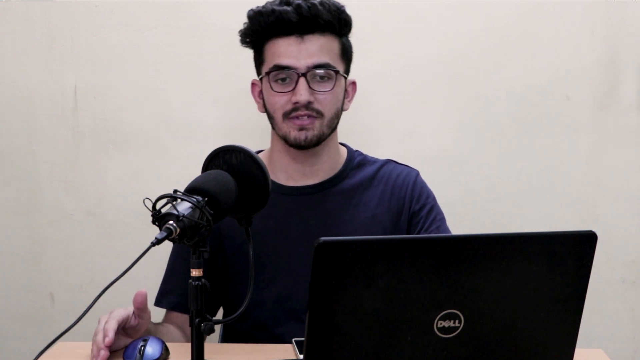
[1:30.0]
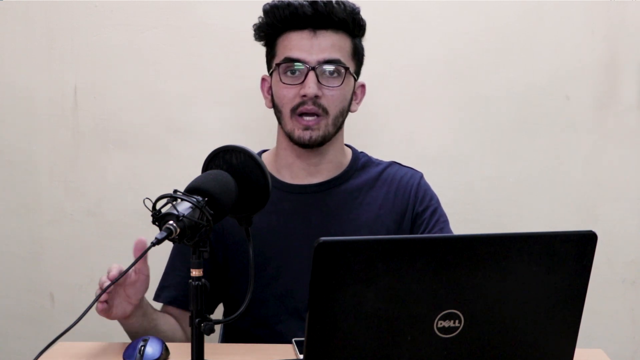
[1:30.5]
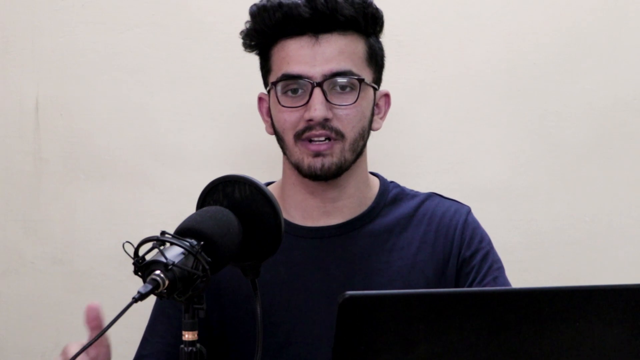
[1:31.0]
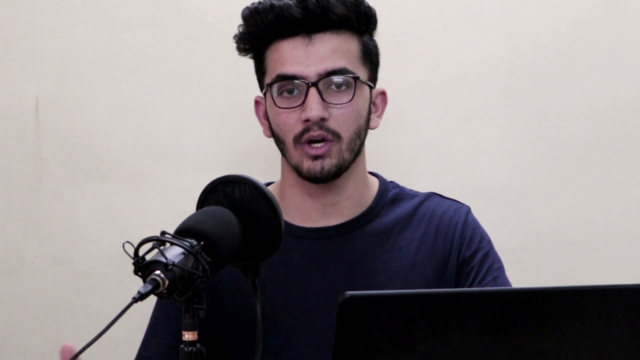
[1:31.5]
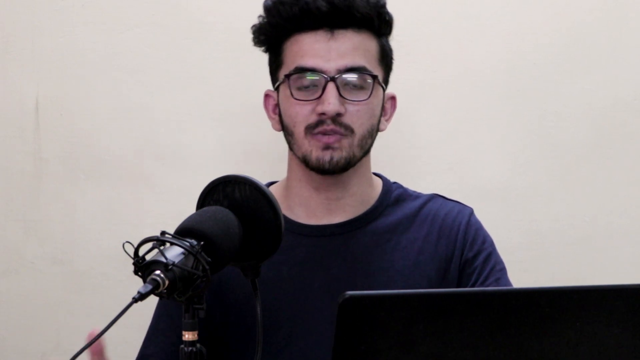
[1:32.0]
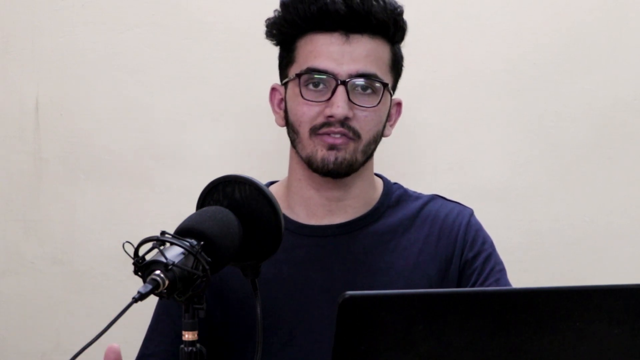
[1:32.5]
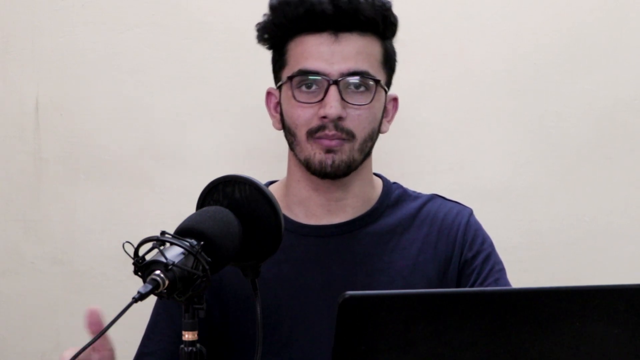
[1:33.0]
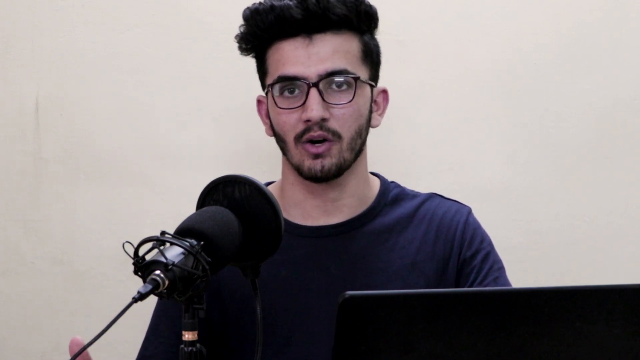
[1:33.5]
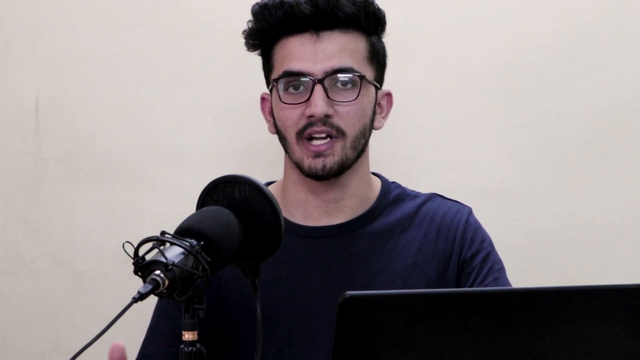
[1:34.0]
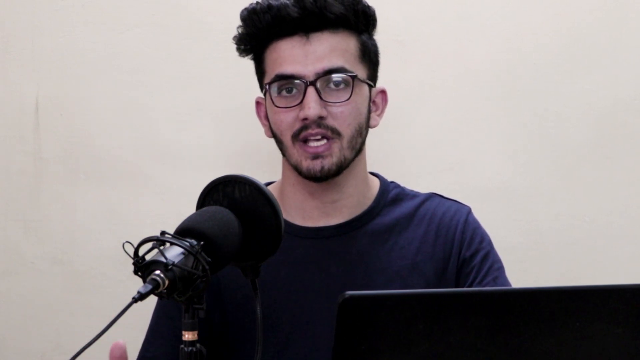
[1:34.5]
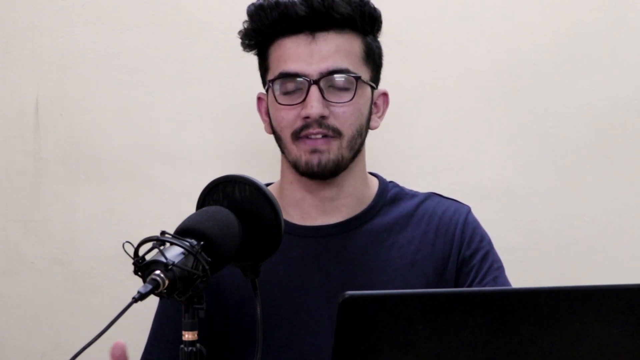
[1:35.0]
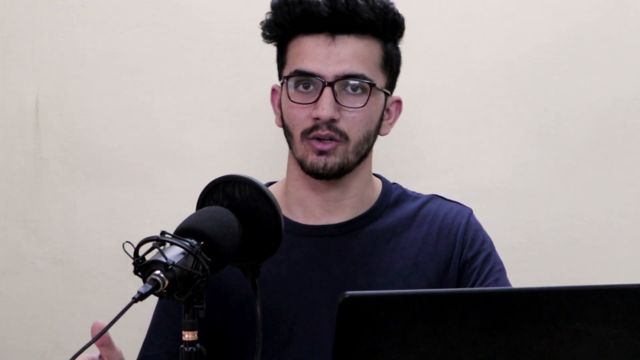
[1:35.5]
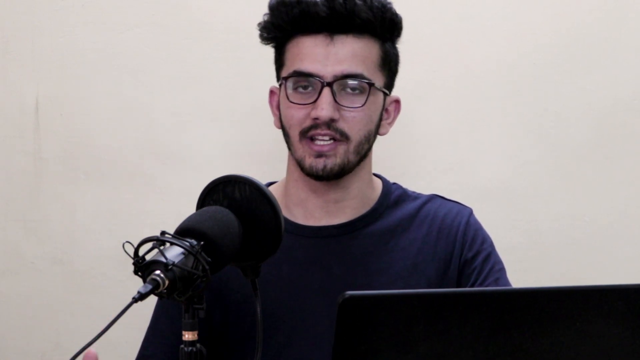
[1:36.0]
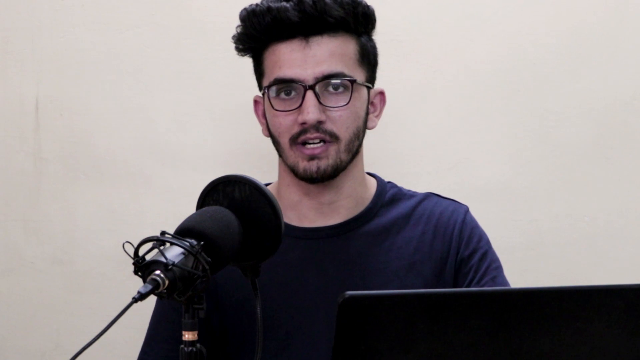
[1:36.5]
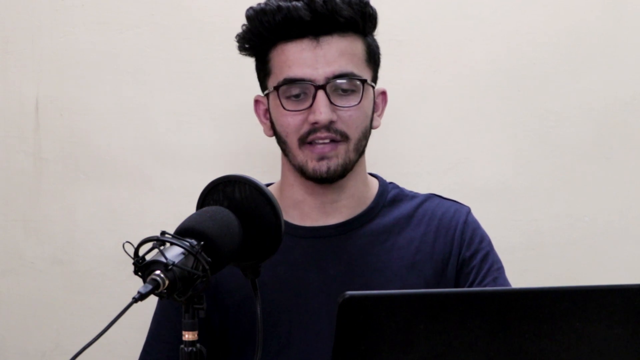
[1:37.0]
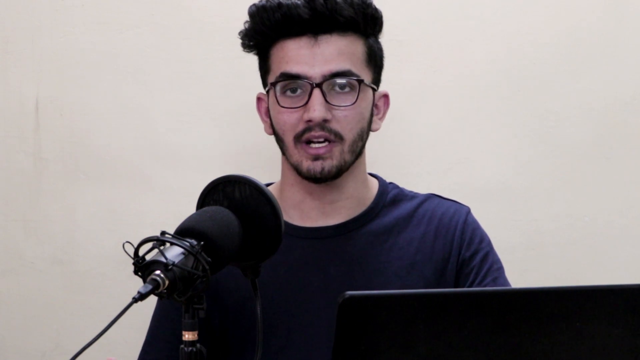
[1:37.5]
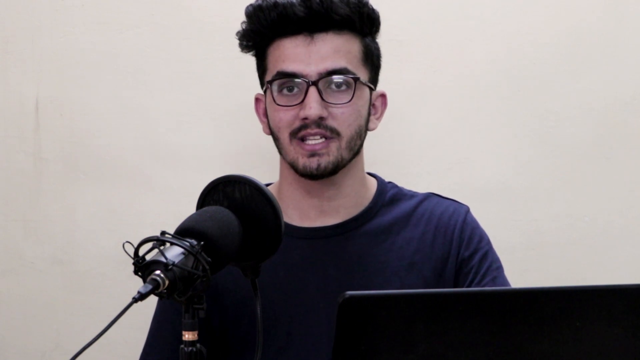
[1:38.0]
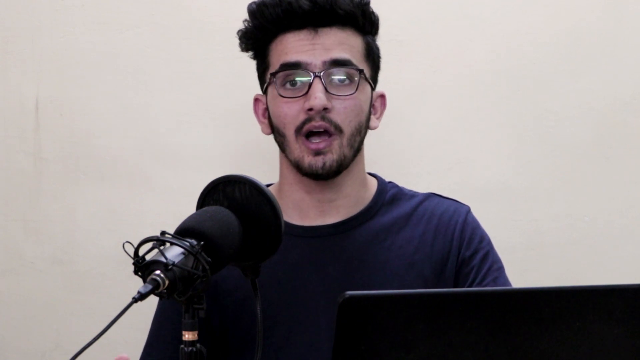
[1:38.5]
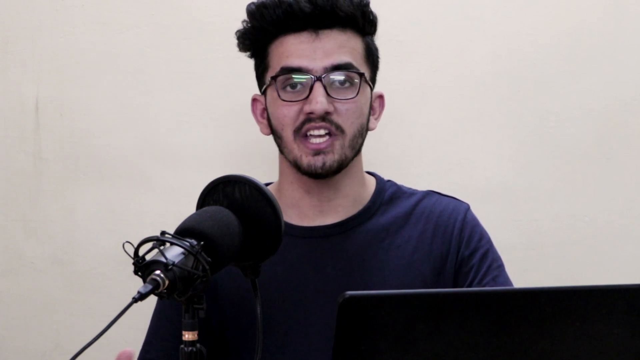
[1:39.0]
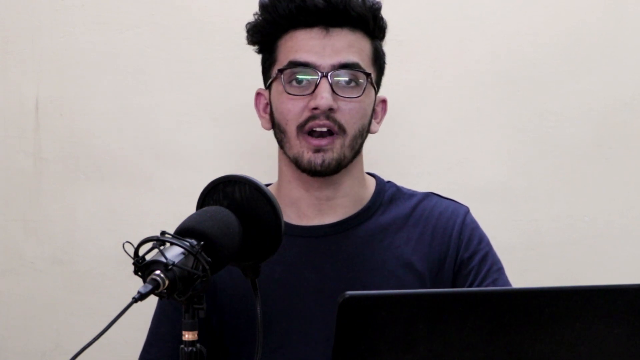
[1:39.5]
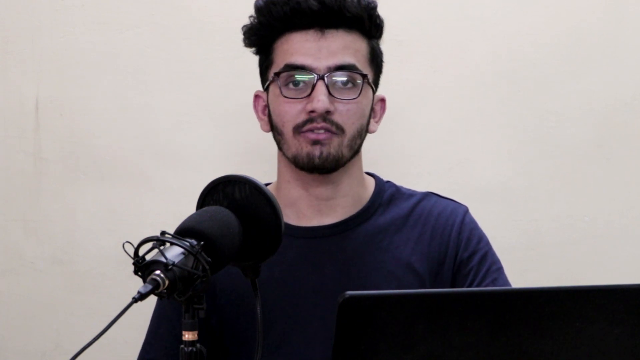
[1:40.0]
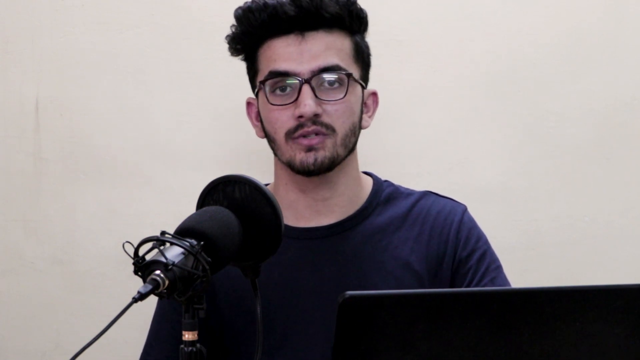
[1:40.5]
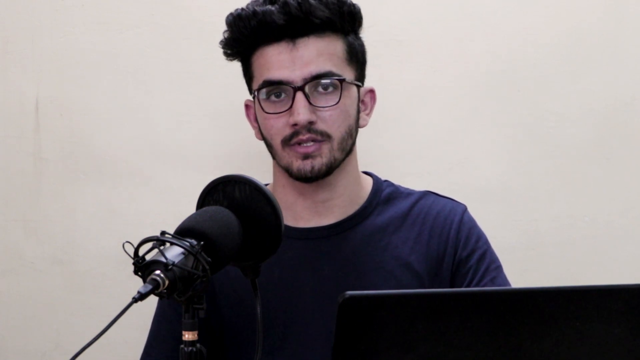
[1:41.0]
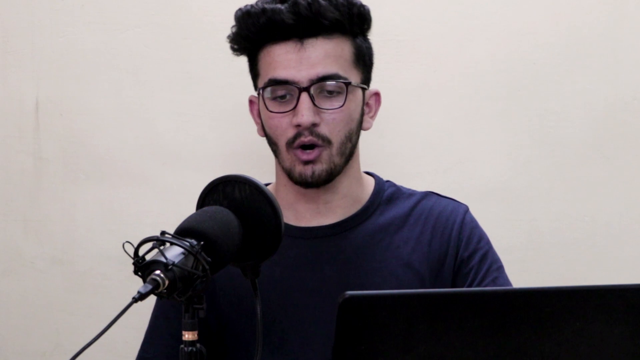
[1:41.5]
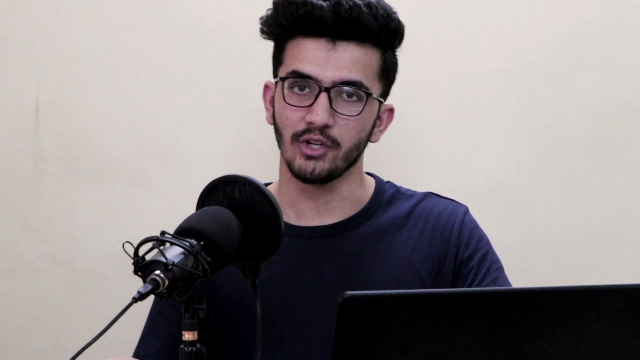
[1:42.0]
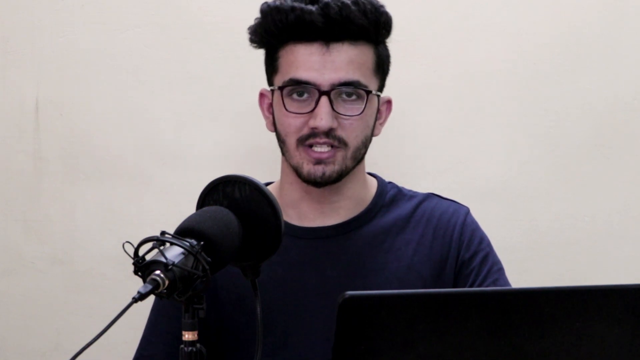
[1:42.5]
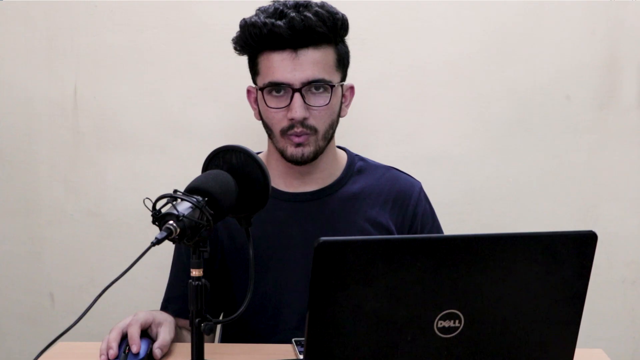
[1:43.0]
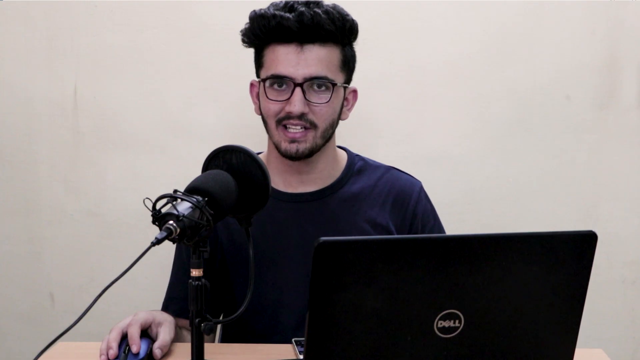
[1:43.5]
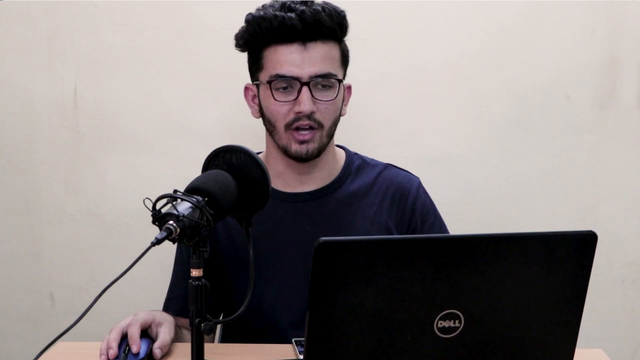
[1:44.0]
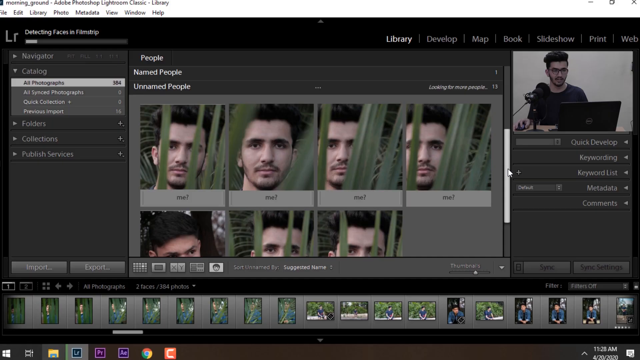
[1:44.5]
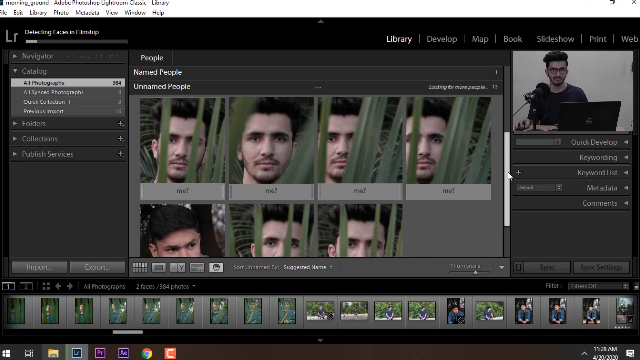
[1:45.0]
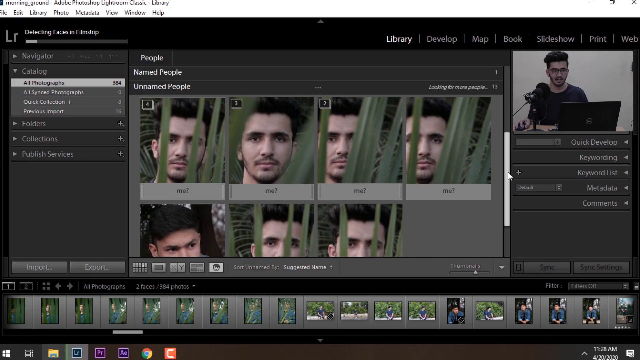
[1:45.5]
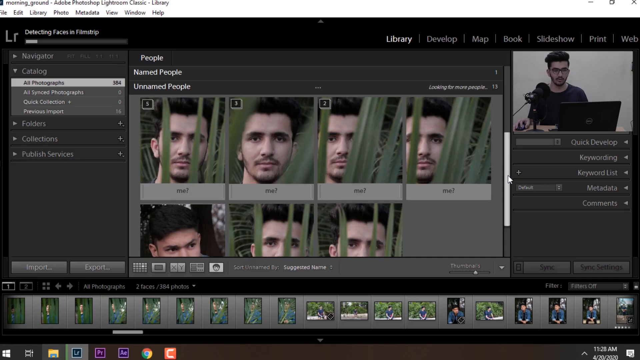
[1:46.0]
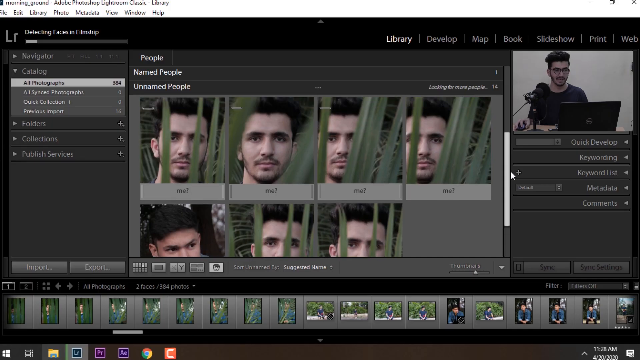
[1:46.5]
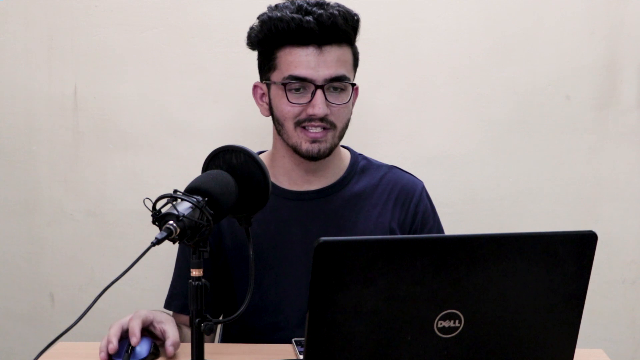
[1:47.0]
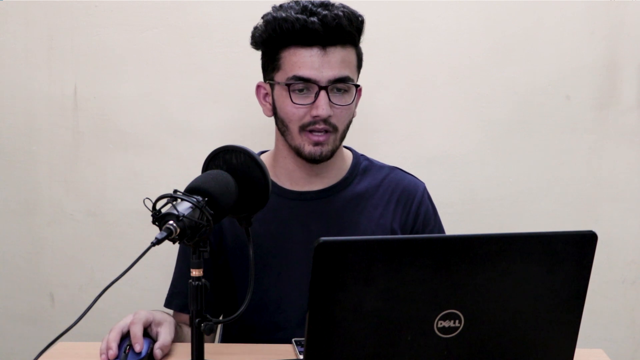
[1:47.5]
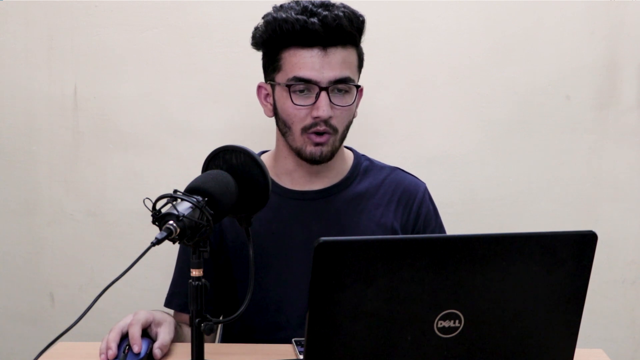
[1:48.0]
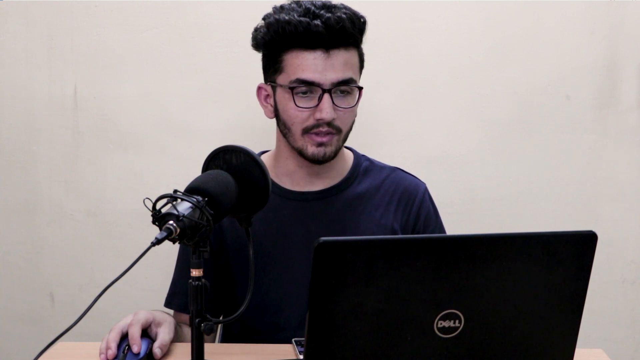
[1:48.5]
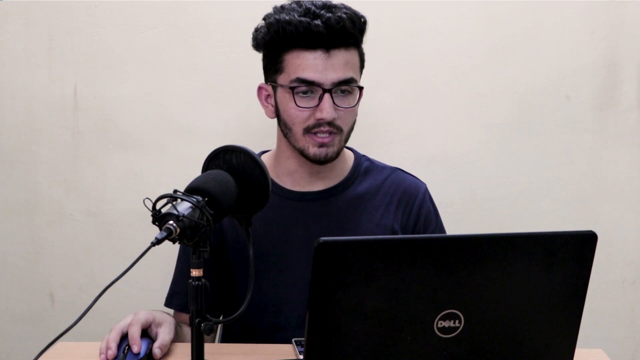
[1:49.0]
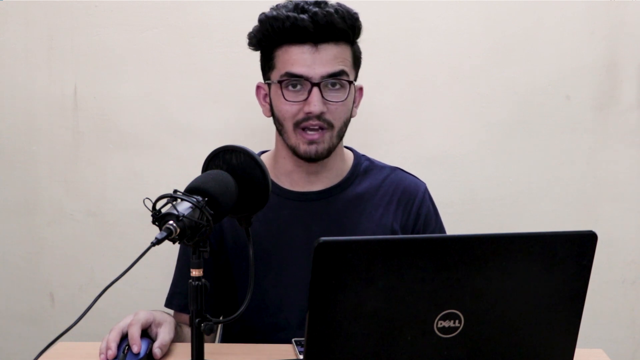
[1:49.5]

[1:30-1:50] The creator sits behind the laptop and microphone against the white background, speaking to the camera, and the camera view somewhat zooms in to the person's face. They continue speaking to the camera as if explaining something for a while. The video then cuts back to the Adobe Lightroom screen, going through the catalog of faces that has been created. It then cuts back to the creator speaking while looking at the computer screen and back at the camera.